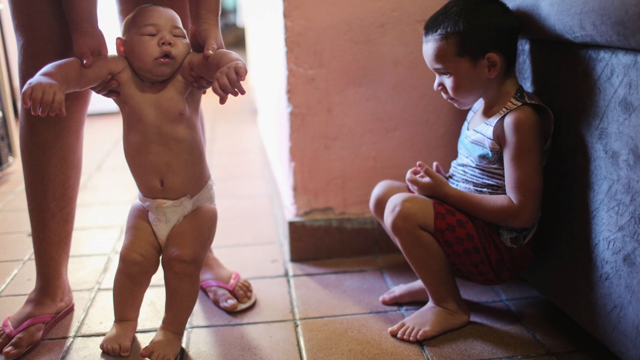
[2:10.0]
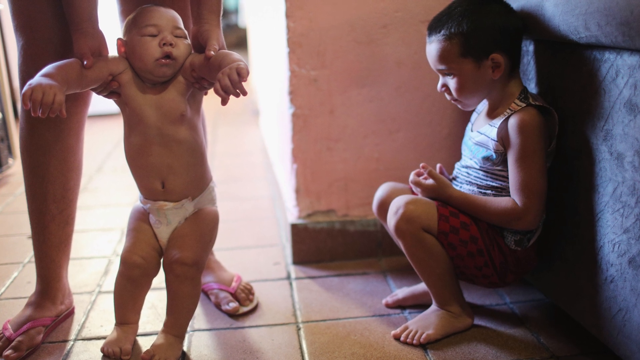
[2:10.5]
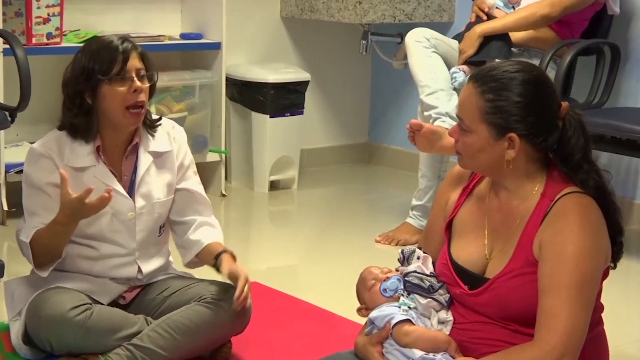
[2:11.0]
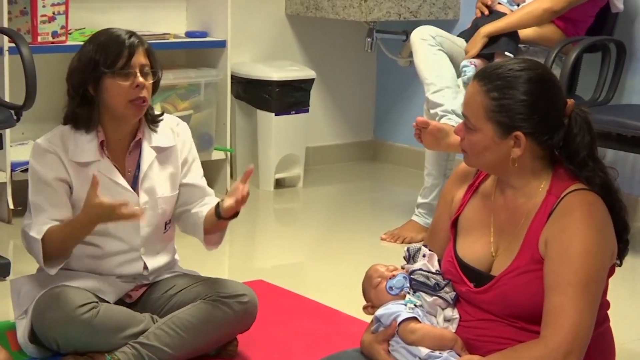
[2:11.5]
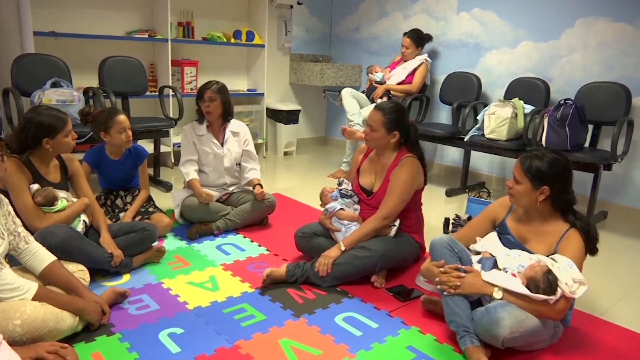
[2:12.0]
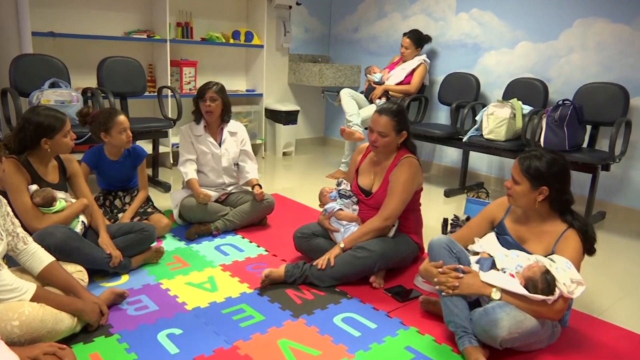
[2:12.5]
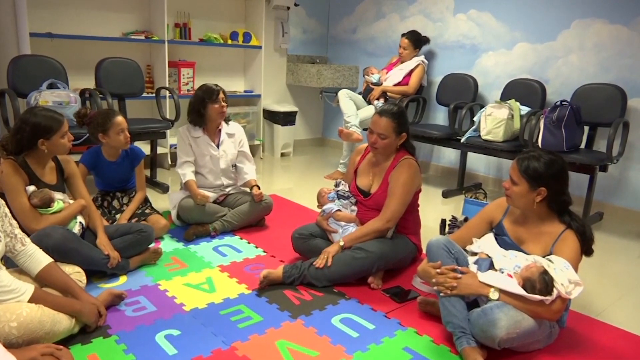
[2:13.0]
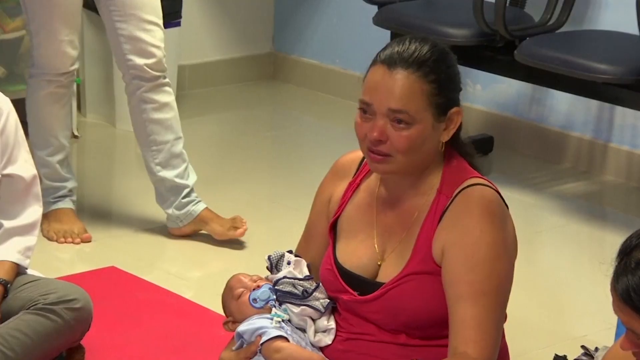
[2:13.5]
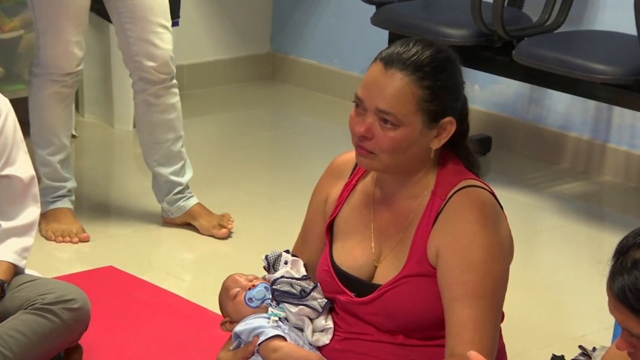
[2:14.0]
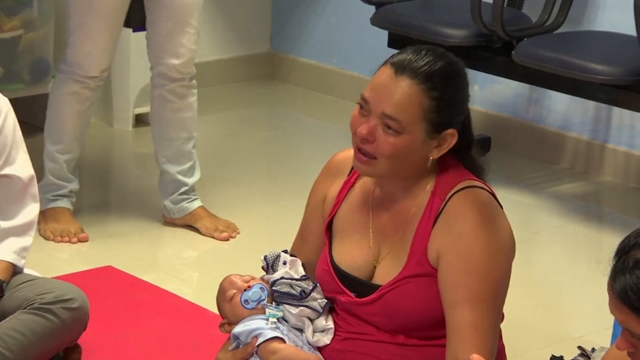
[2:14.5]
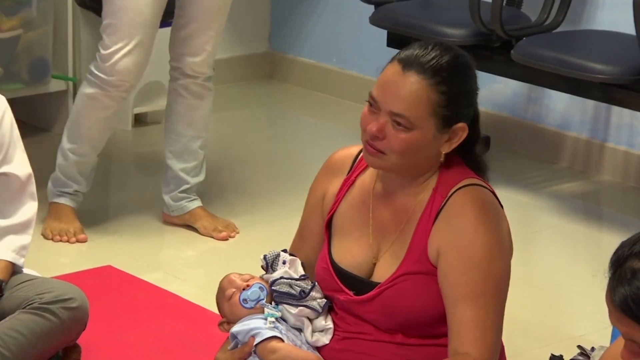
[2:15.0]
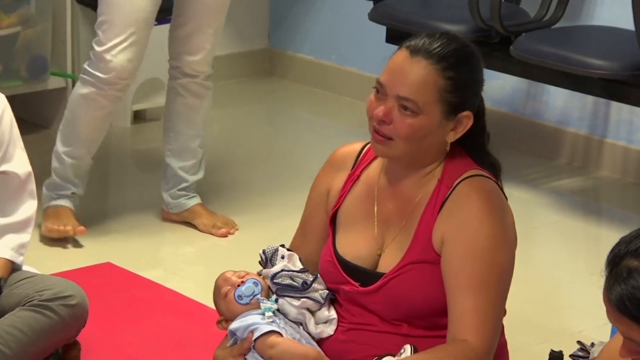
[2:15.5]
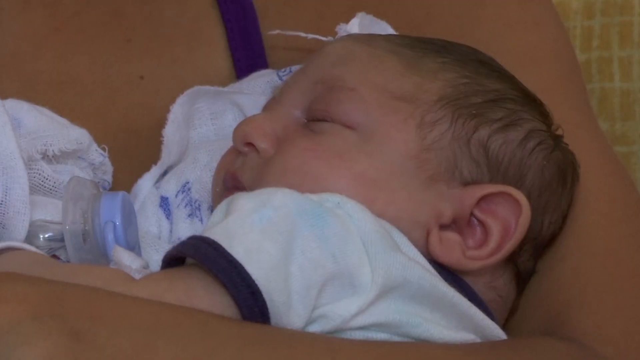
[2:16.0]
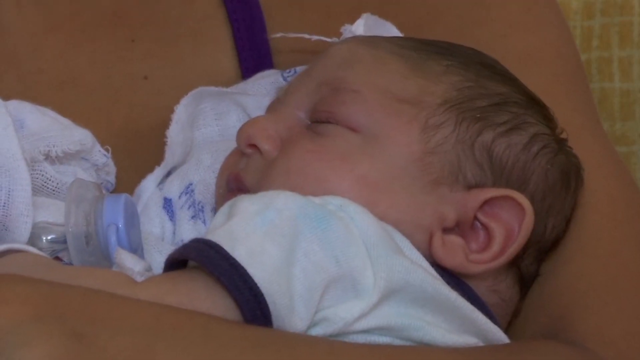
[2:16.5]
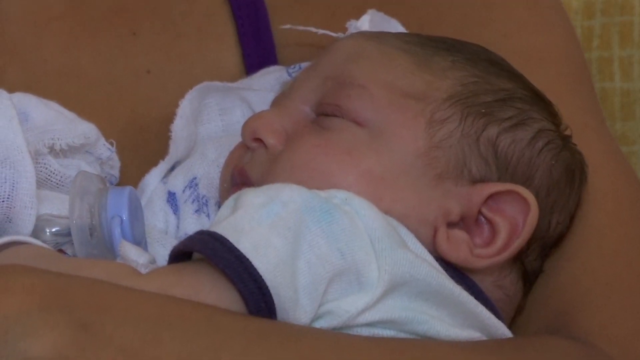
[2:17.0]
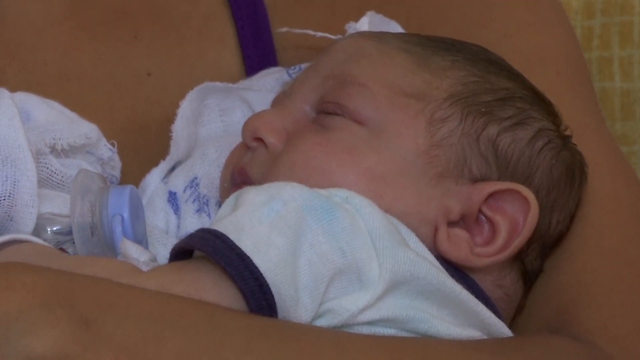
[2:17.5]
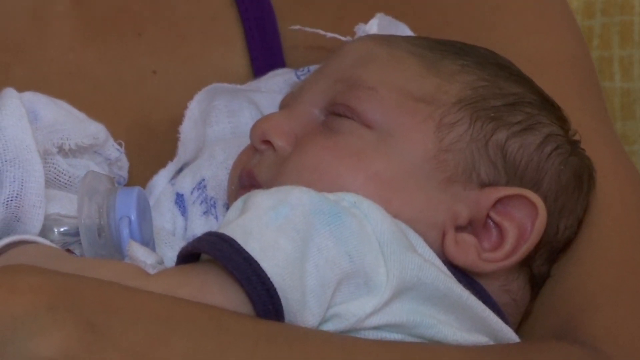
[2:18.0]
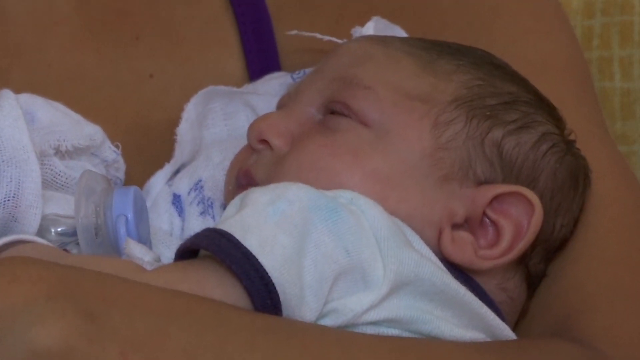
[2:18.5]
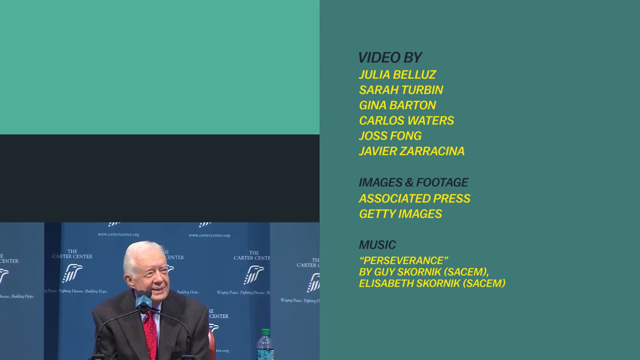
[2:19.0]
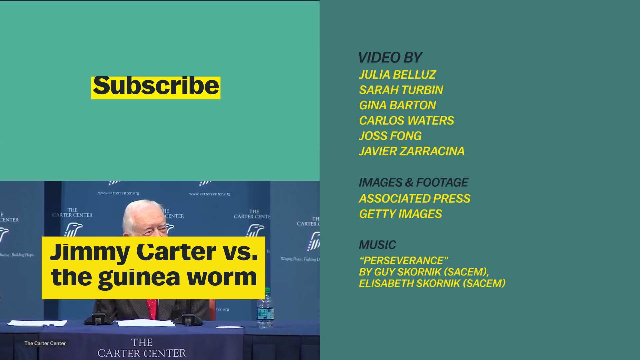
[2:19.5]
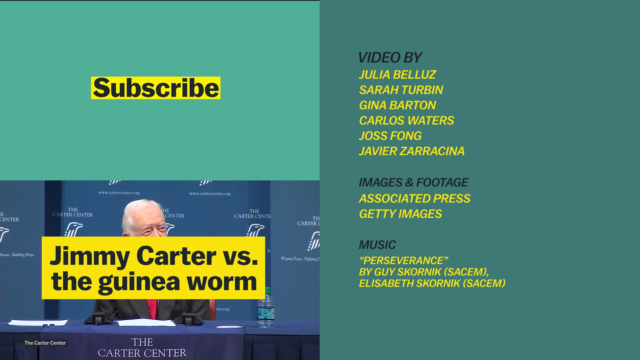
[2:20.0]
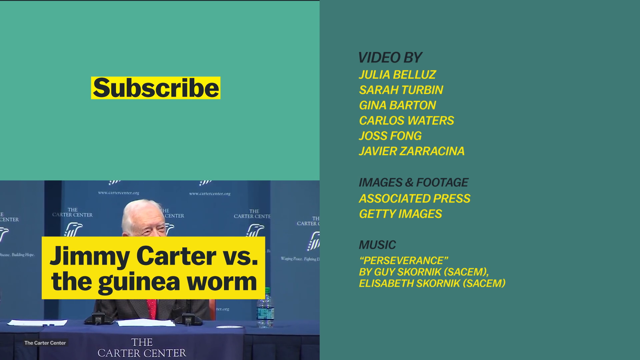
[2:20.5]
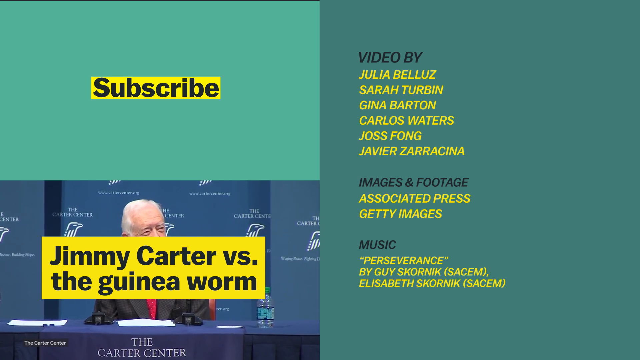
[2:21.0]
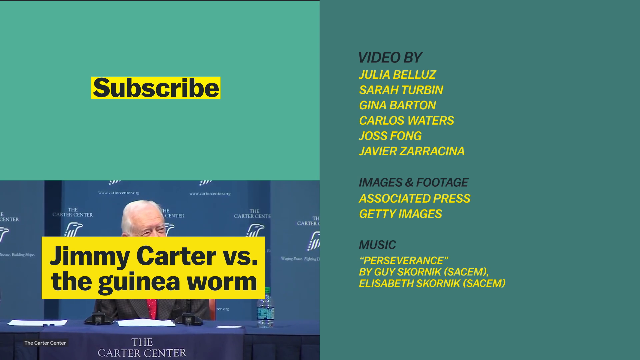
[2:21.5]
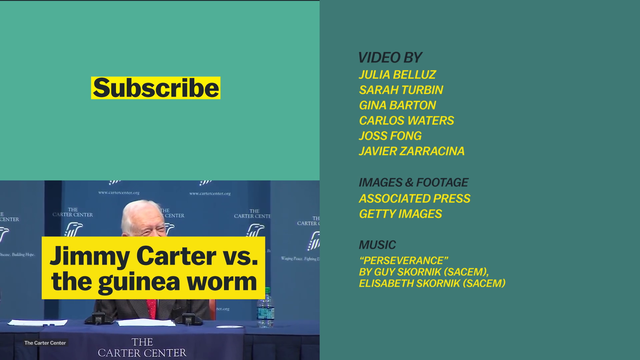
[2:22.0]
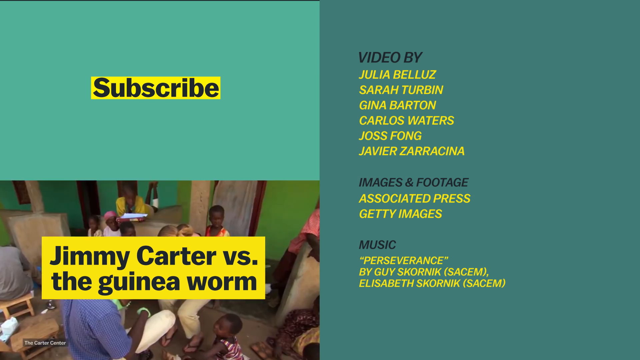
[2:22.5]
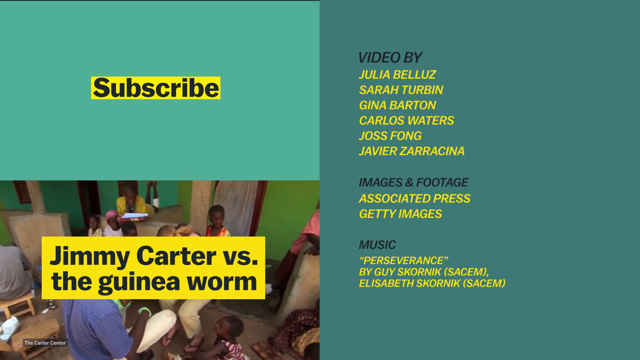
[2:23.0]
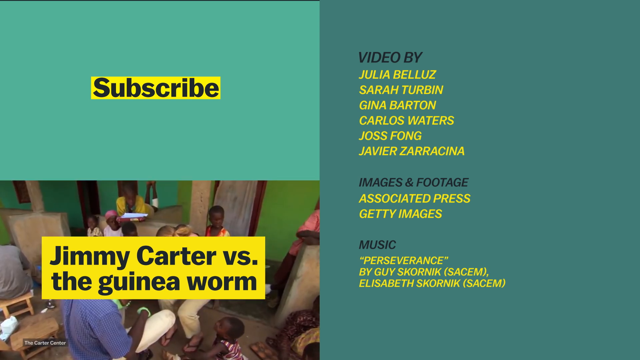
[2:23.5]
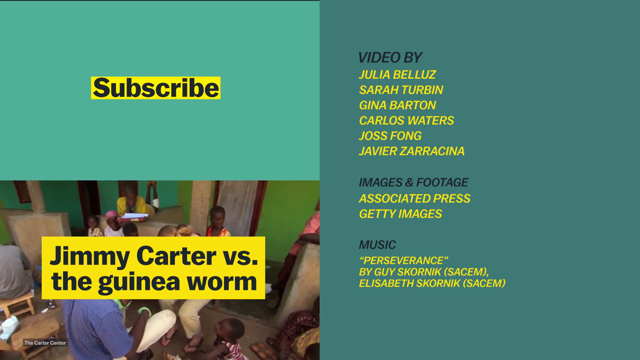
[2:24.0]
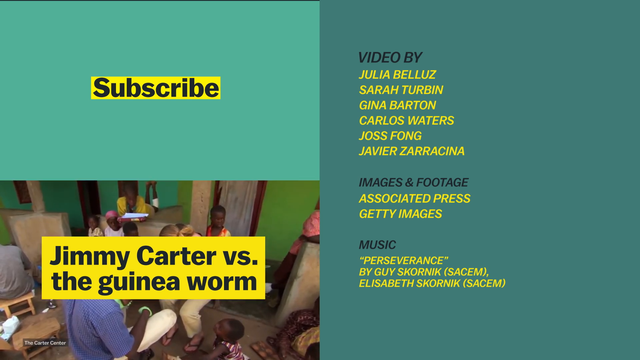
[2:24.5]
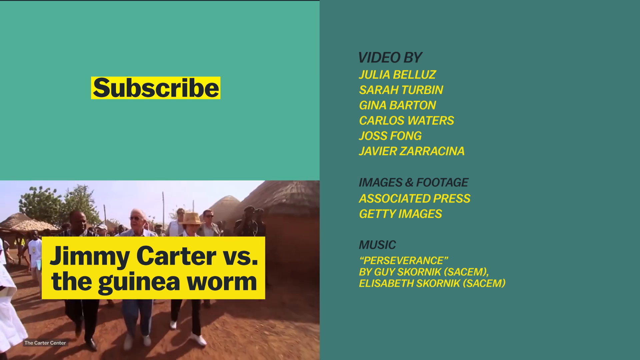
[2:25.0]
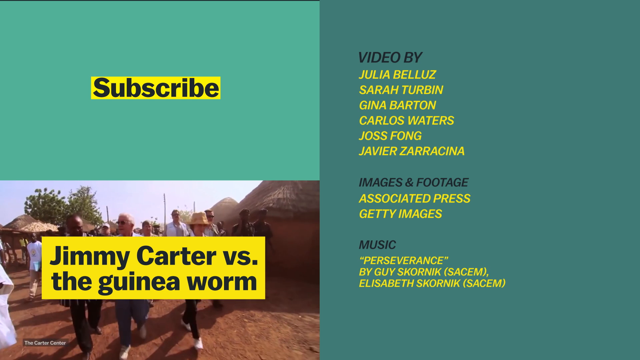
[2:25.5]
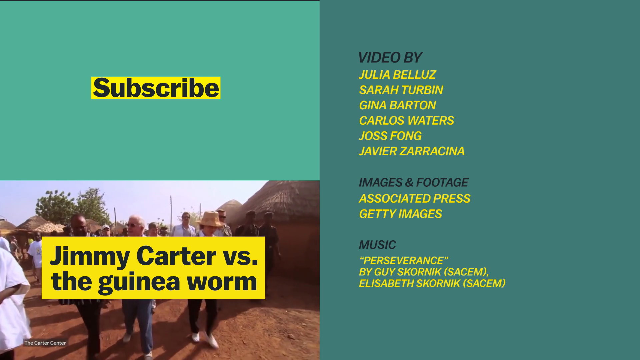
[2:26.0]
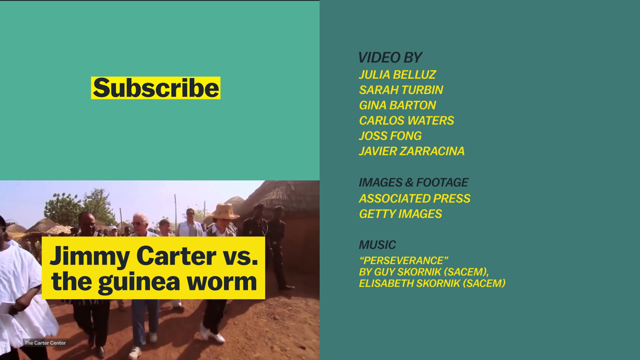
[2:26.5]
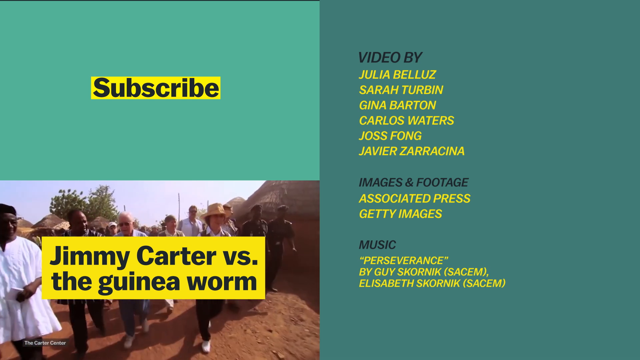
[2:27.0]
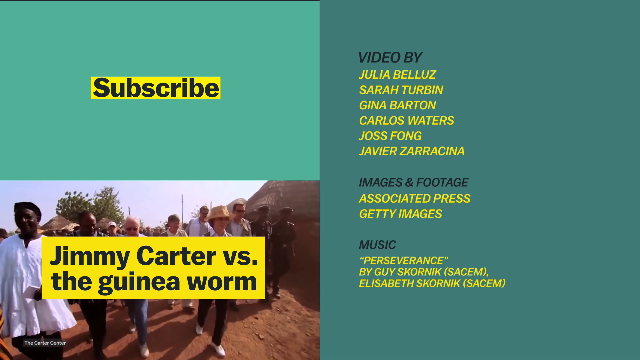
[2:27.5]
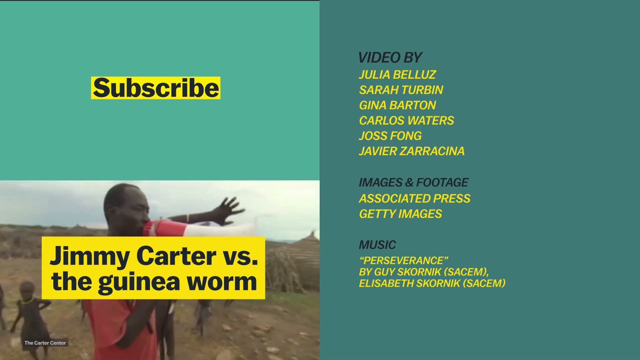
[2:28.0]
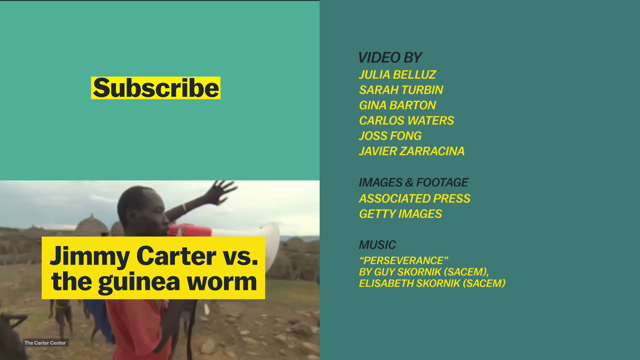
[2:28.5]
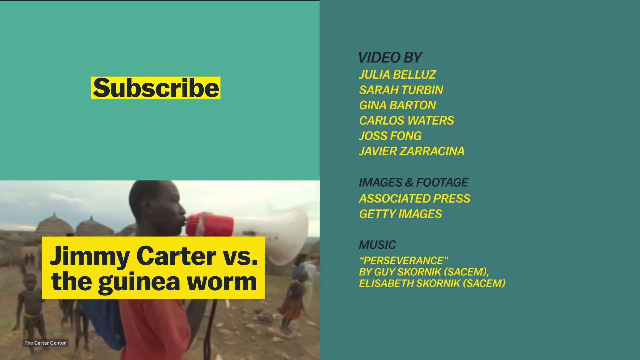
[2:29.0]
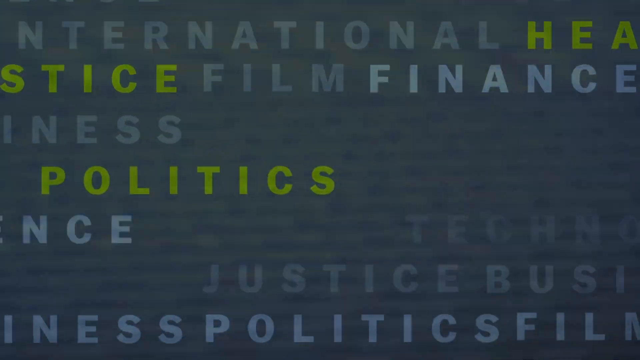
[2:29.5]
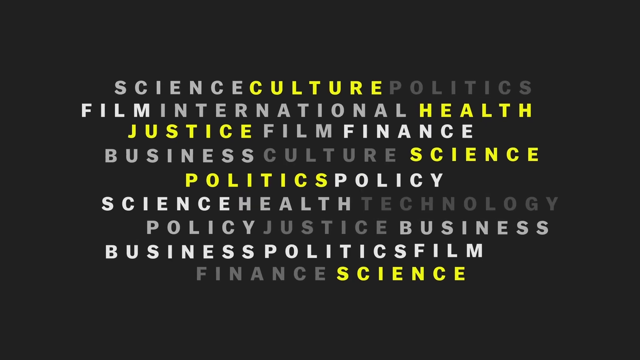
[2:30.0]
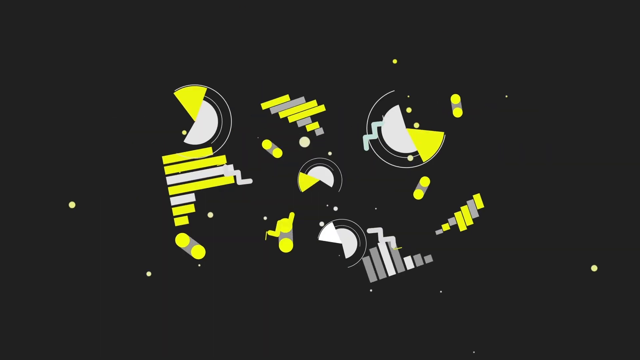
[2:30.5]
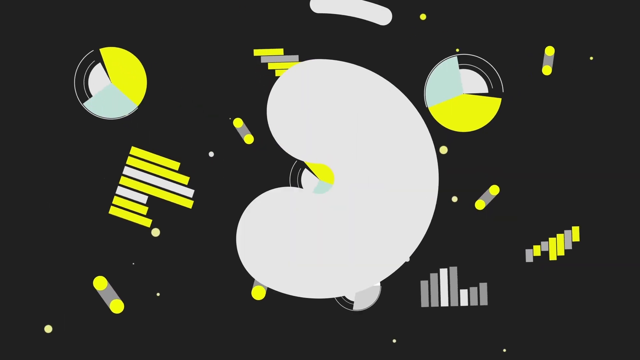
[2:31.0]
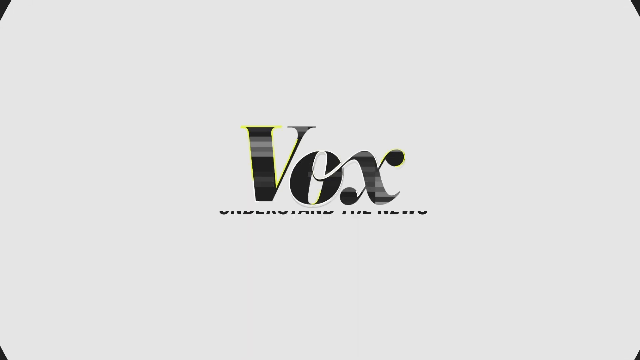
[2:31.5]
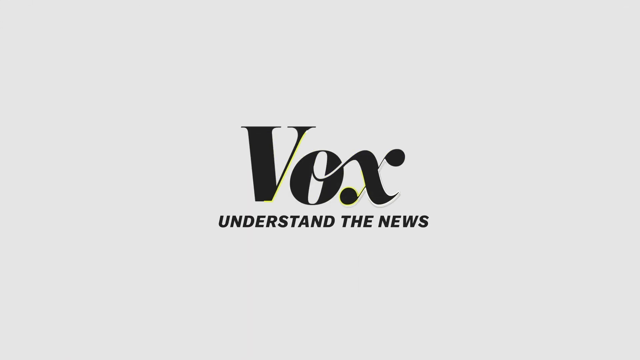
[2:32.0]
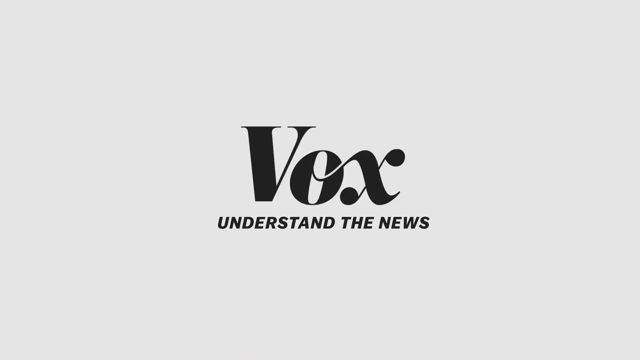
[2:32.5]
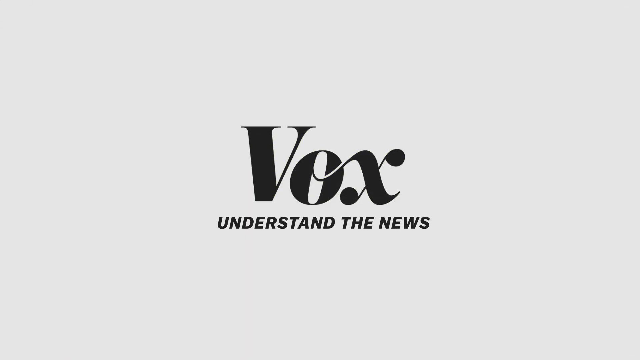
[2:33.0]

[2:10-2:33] Hospital staff sit down with mothers and babies, discussing something. Text reads "Jimmy Carter versus the Guinea worm." Closing credits show a subscribe prompt and list the video by Julia Belouz, Sarah Turban, Gina Barden, Carlos Waters and Joss Fong, images and footage from Associated Press and Getty Images, and music. A subscribe screen then shows the categories science, culture, politics, health and justice, highlighted in yellow.